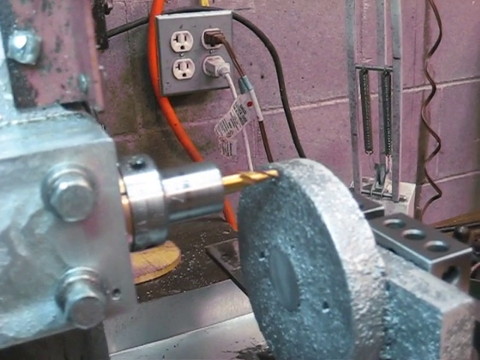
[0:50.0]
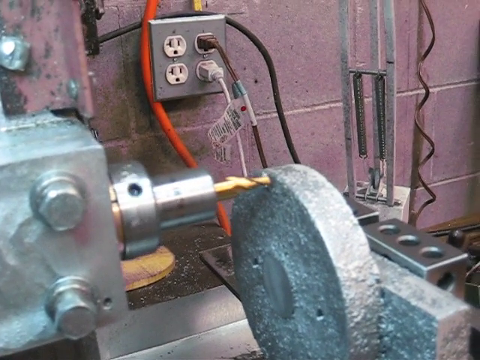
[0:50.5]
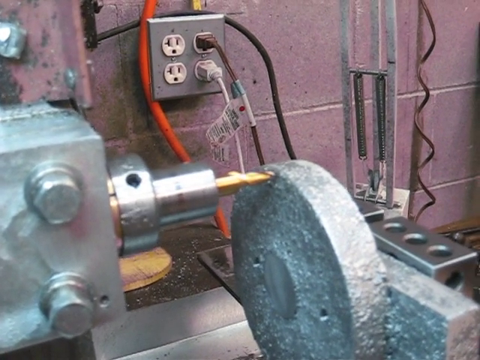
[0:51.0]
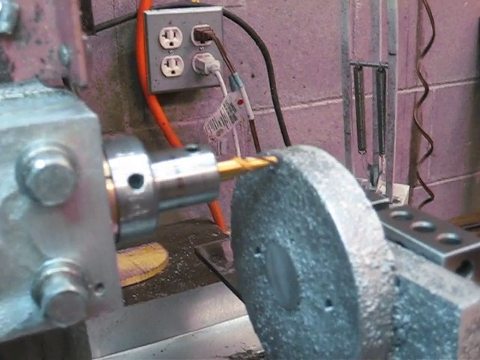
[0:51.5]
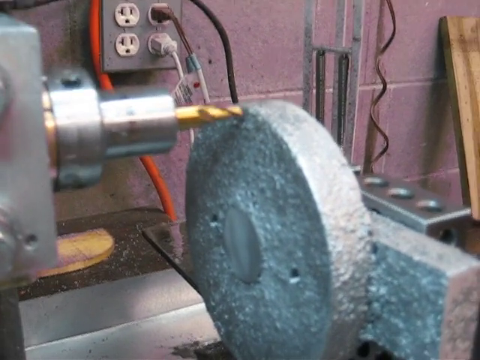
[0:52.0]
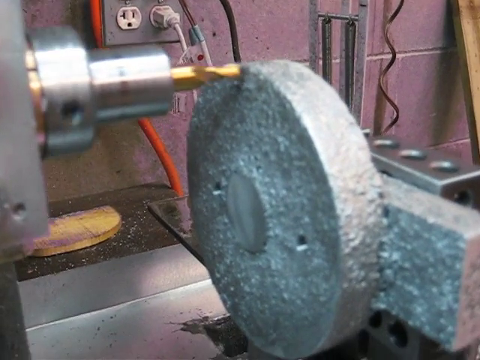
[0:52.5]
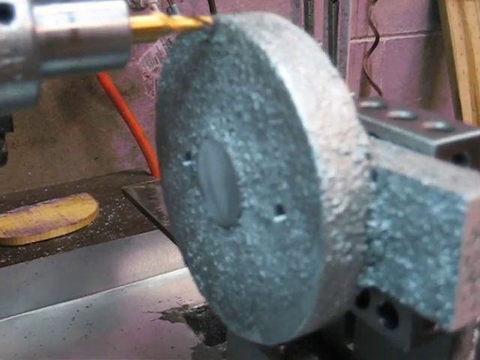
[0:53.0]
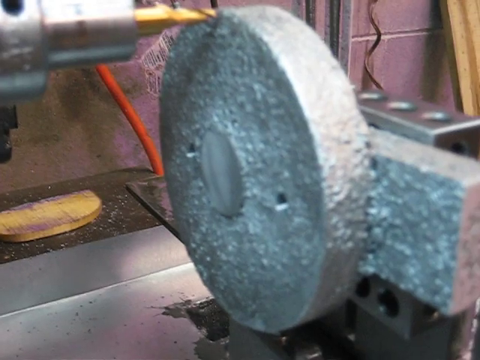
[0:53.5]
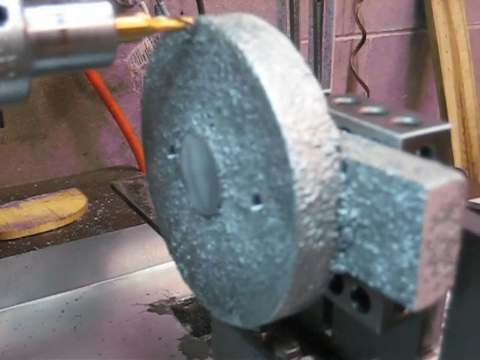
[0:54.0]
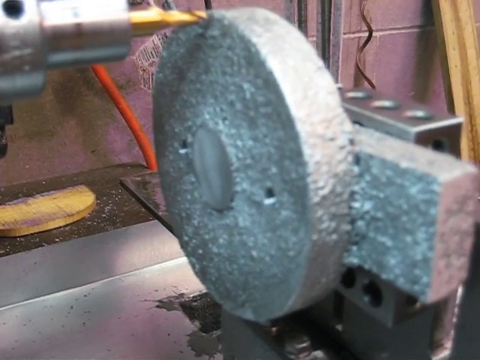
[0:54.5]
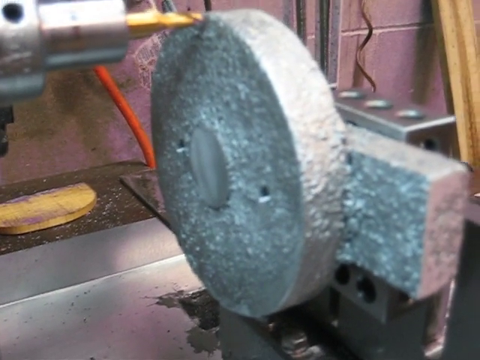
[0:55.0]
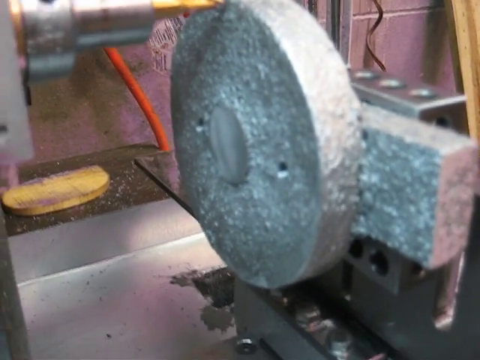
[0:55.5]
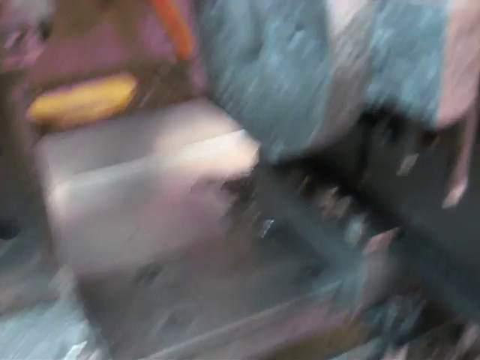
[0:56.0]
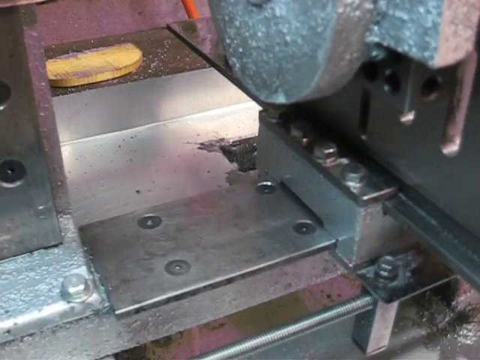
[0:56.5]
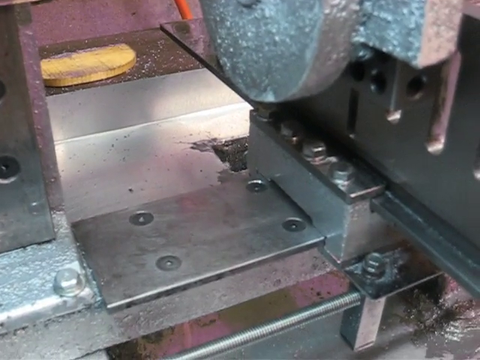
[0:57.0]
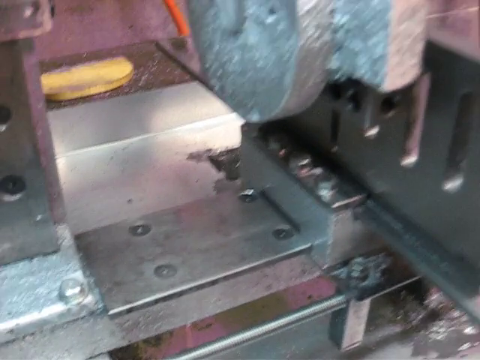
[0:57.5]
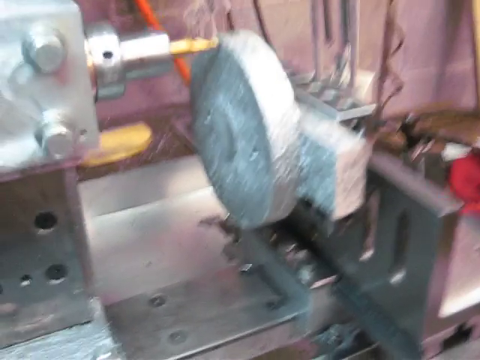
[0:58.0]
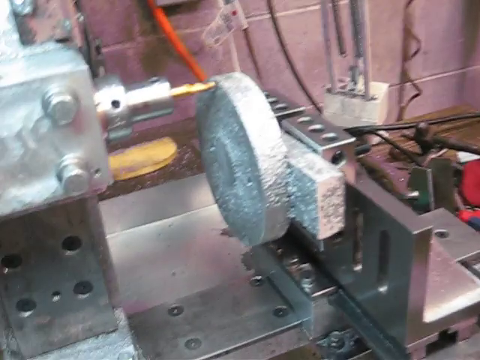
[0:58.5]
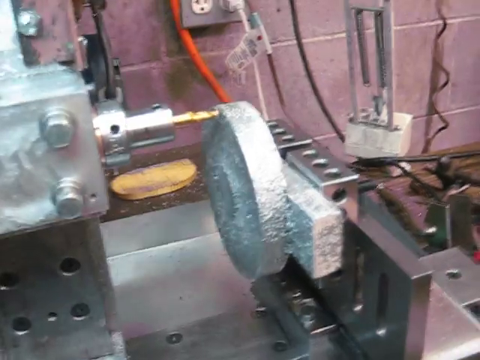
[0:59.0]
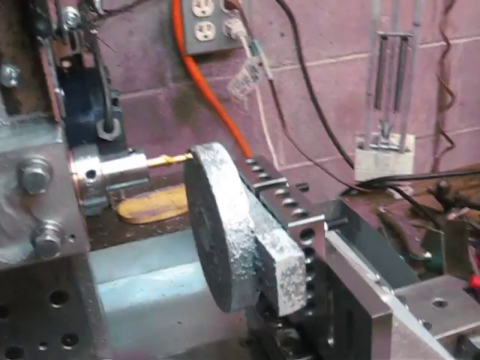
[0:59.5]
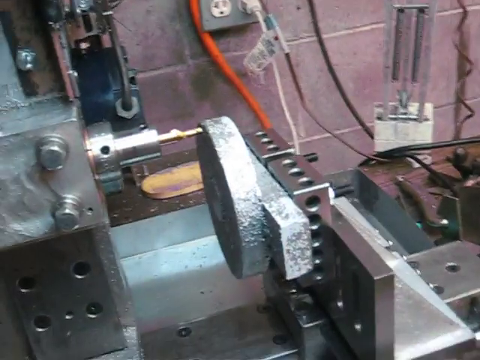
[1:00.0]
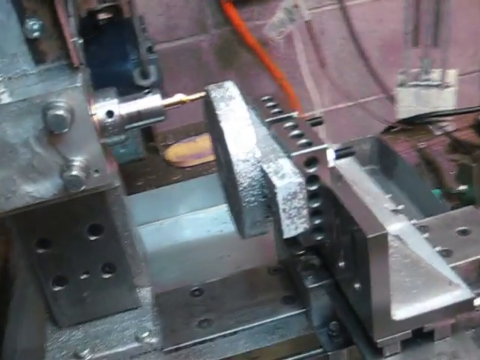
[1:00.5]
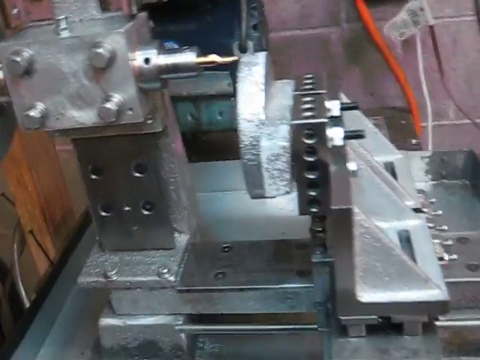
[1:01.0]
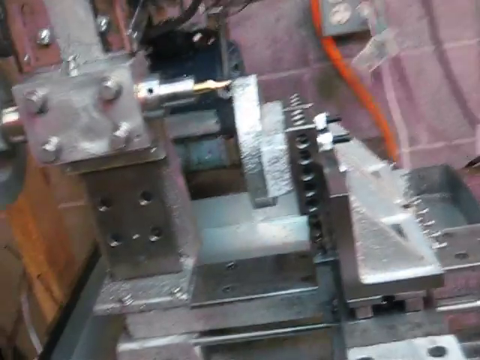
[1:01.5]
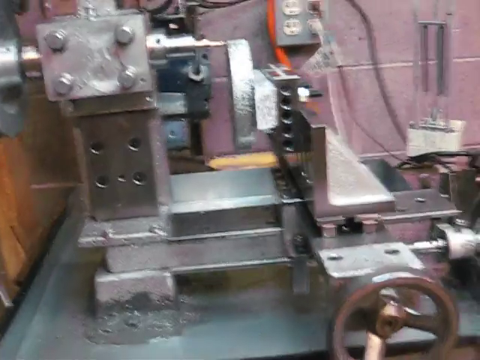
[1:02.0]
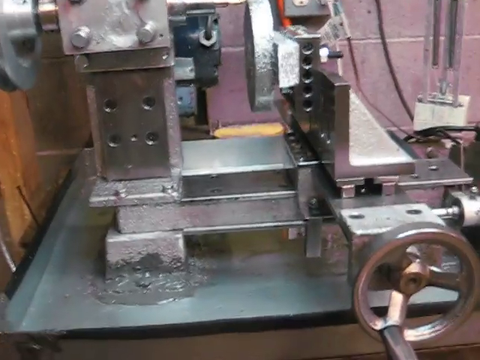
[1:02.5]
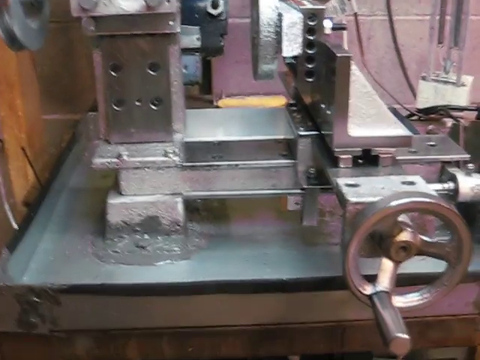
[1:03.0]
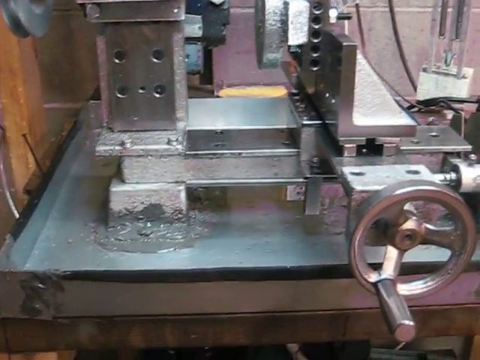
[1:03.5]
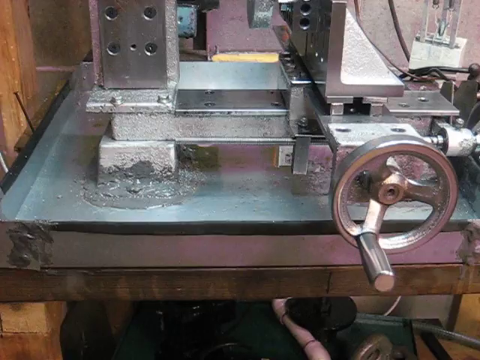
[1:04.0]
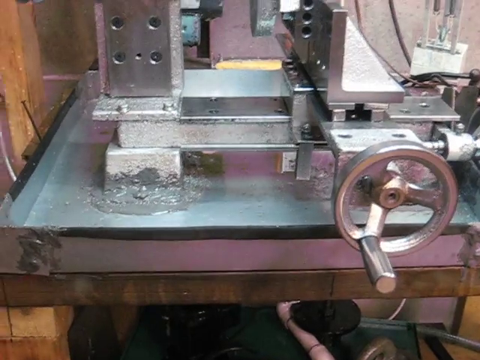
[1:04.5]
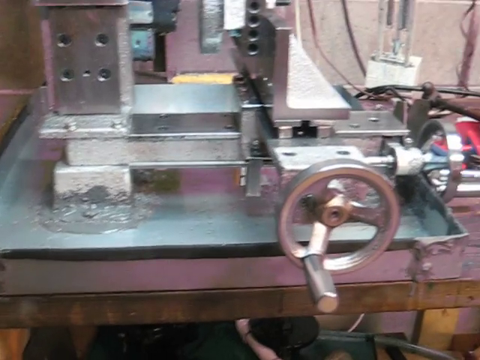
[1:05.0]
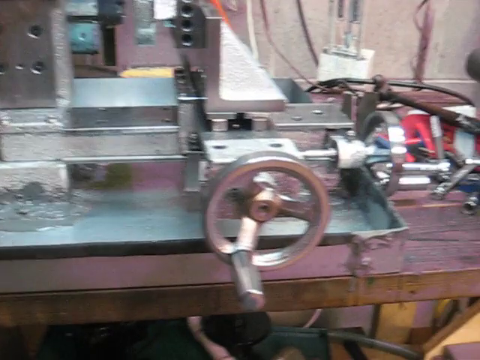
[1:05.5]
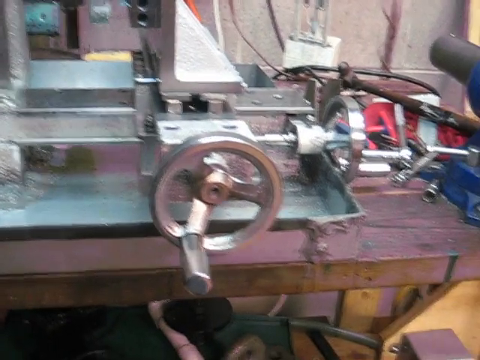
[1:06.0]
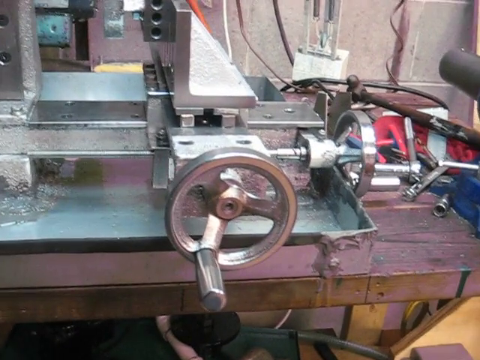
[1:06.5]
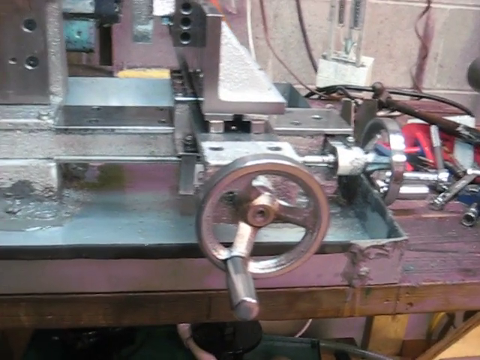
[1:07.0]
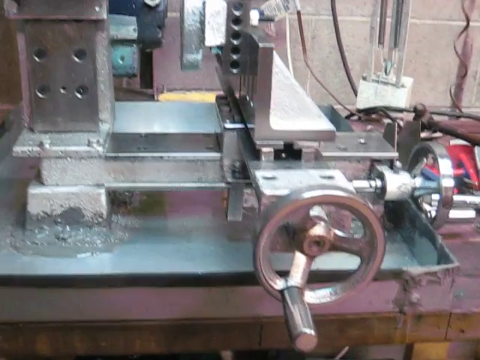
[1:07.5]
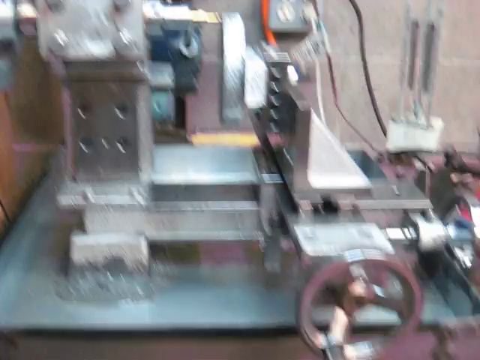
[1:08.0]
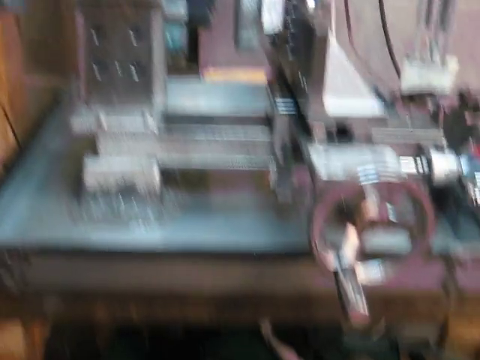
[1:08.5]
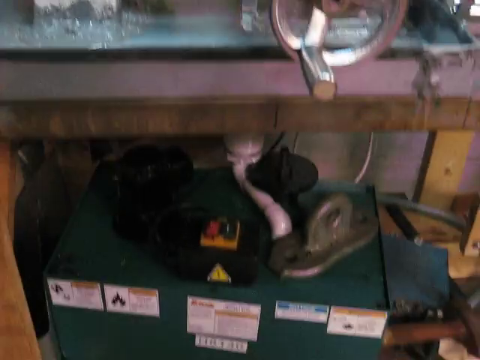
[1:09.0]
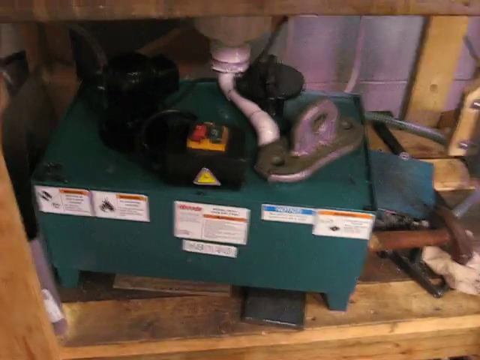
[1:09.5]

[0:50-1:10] The drill bit is a gold-like color and is attached to a silver compartment that seems to lock it in place, which in turn is attached to a thick square piece of metal with four bolts on it. The drill spins and gets very close to what kind of looks like a clamp: a thick circular disc with a thick rectangle attached to it. The drill touches the clamp but does not penetrate it. The camera pans out for a better angle of the whole machine, a big contraption with a lot of metal attached to the drill, what also looks like wheels, and many thick bolts. It is attached to a thick table that almost seems to have cement in the bottom holding it together.